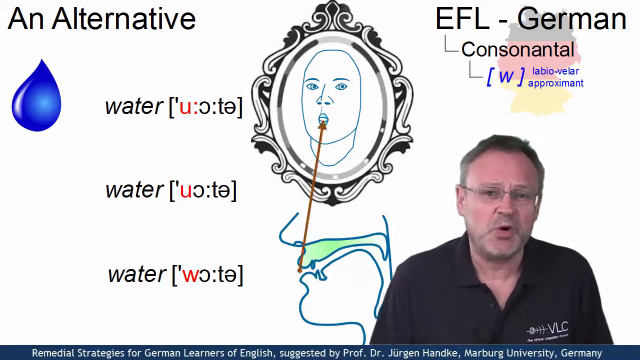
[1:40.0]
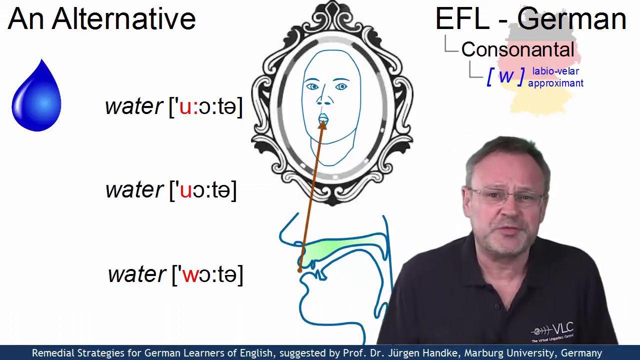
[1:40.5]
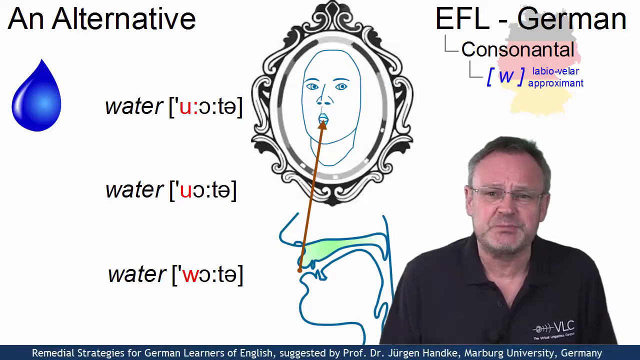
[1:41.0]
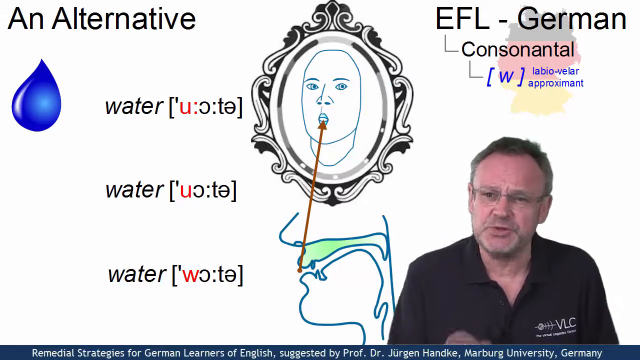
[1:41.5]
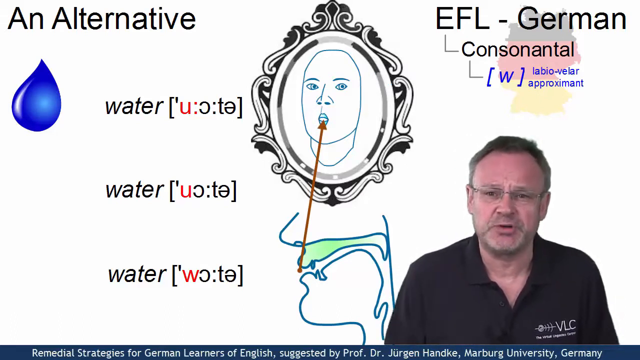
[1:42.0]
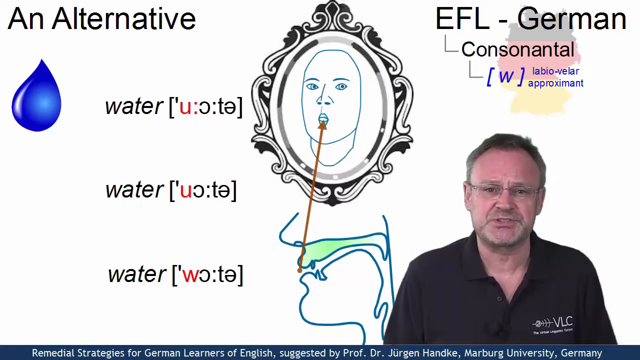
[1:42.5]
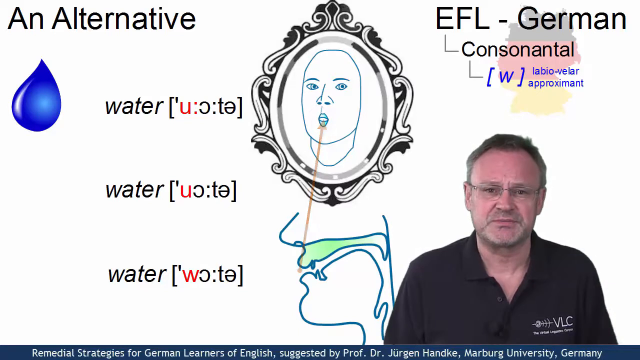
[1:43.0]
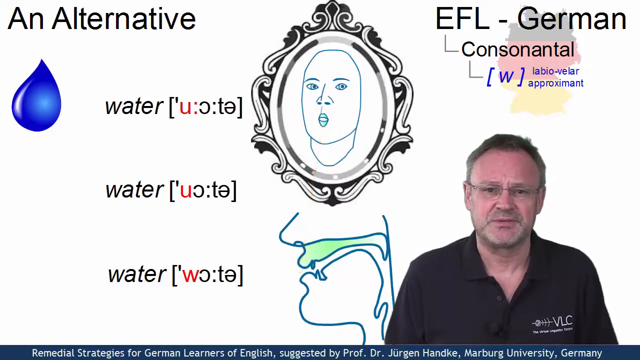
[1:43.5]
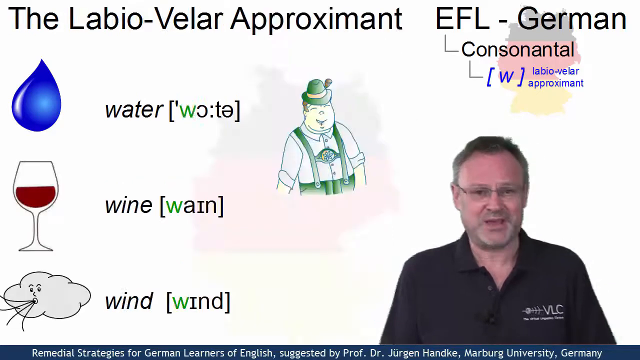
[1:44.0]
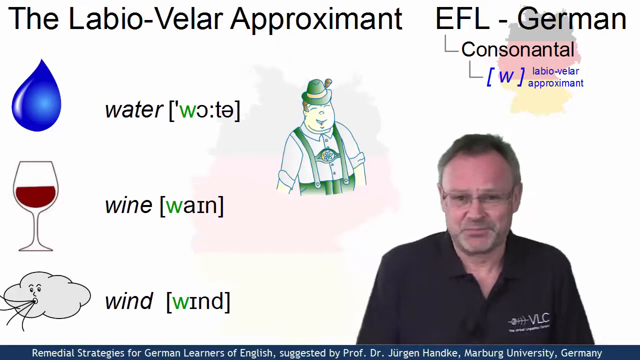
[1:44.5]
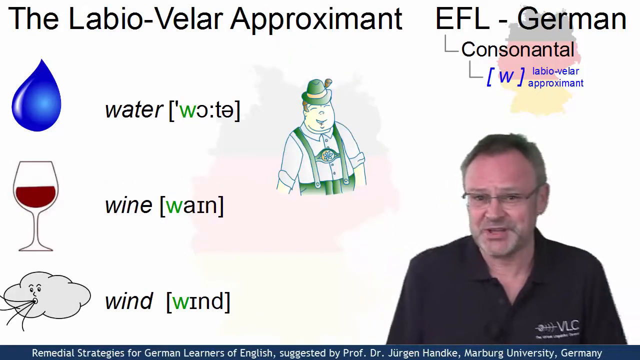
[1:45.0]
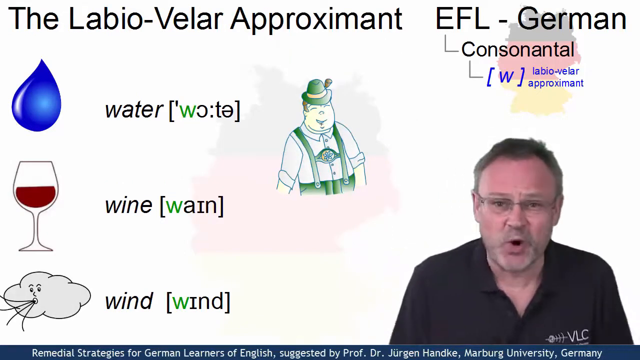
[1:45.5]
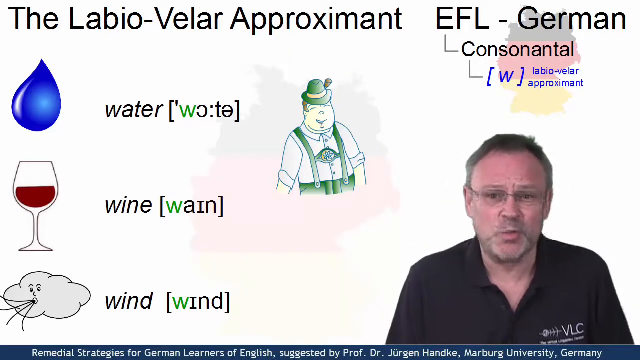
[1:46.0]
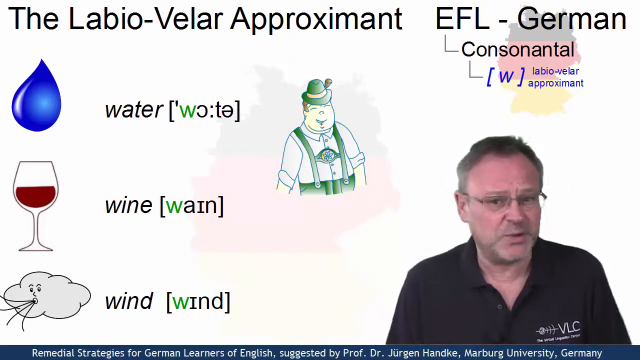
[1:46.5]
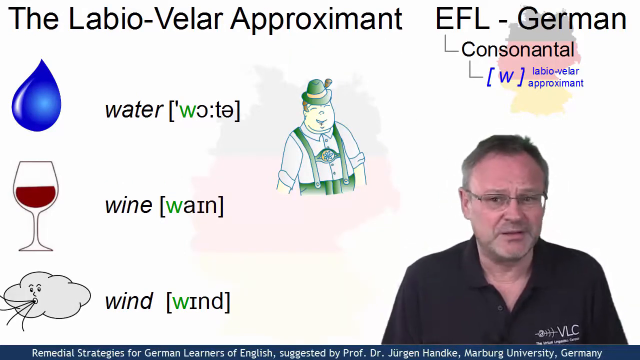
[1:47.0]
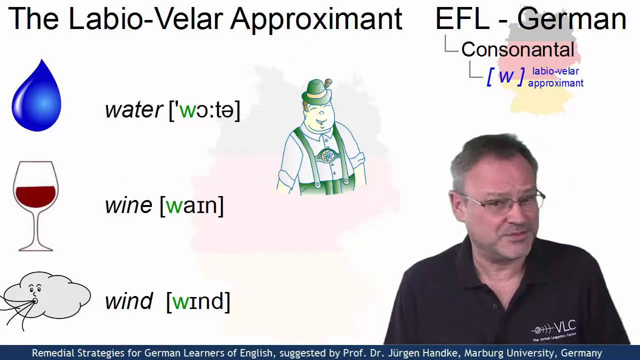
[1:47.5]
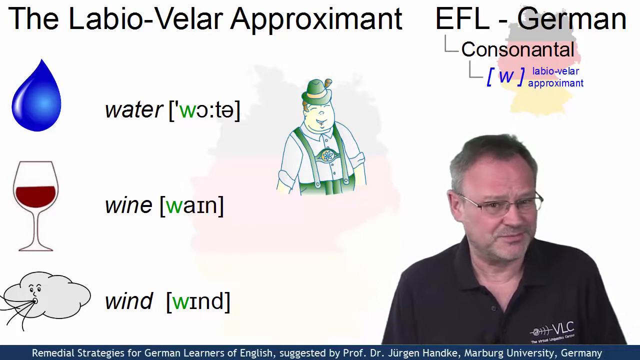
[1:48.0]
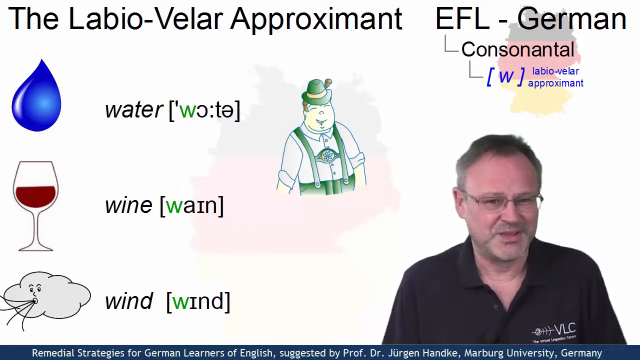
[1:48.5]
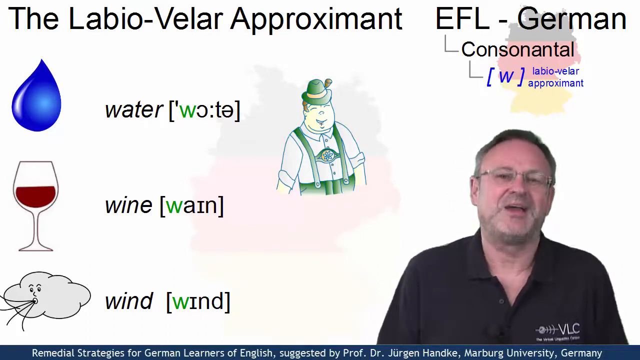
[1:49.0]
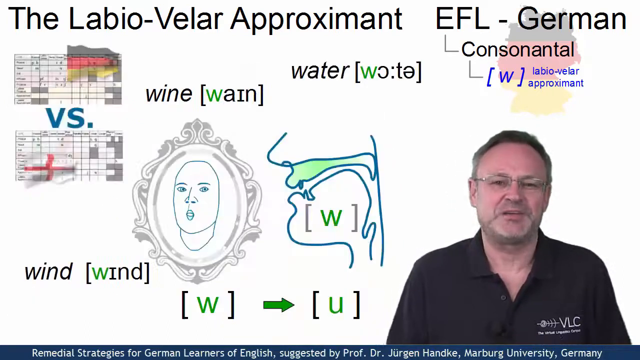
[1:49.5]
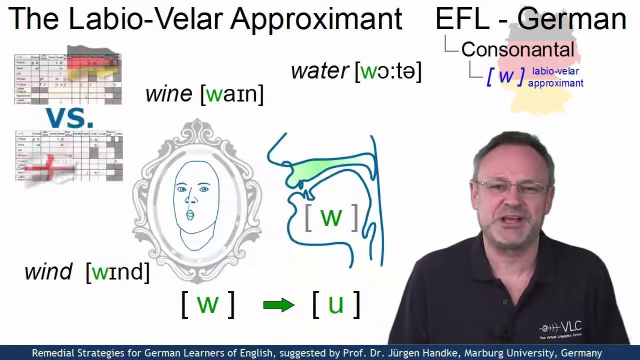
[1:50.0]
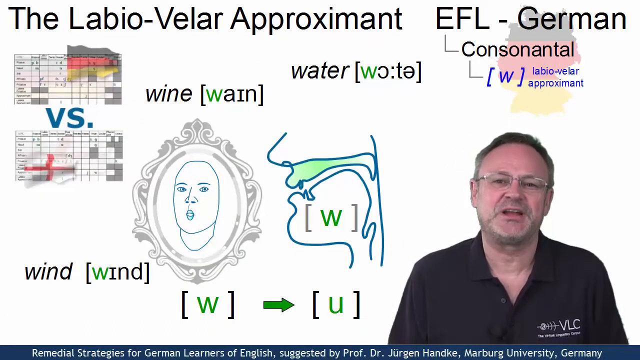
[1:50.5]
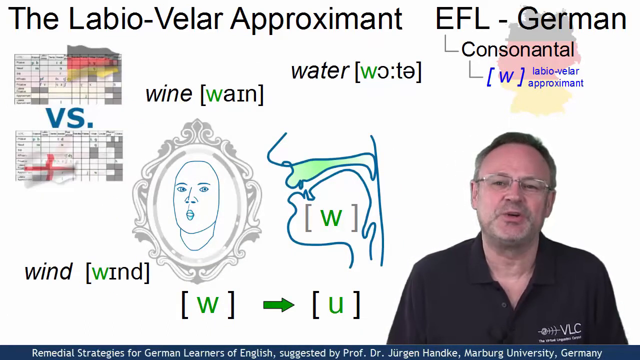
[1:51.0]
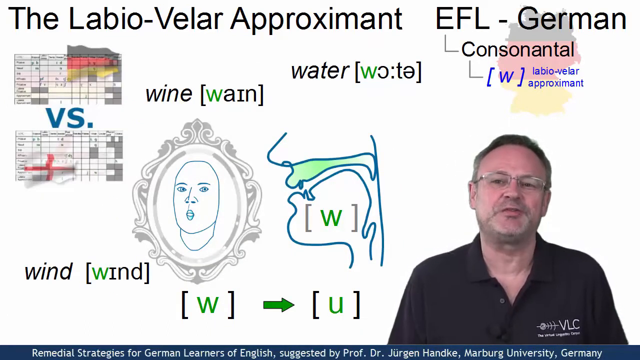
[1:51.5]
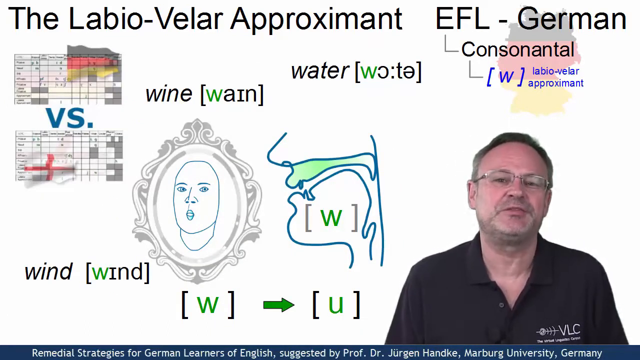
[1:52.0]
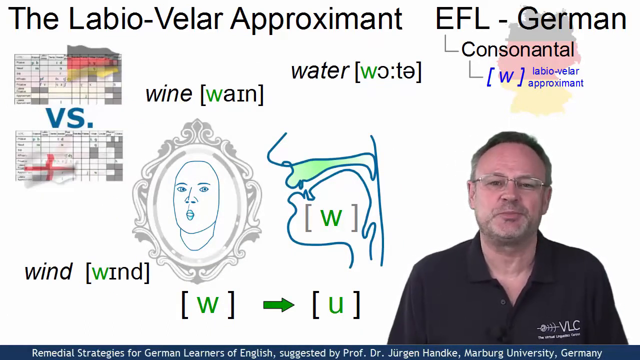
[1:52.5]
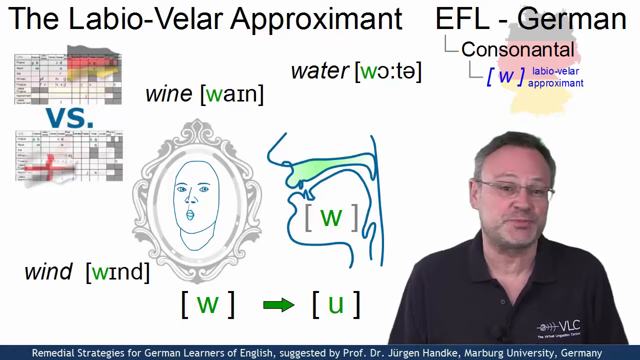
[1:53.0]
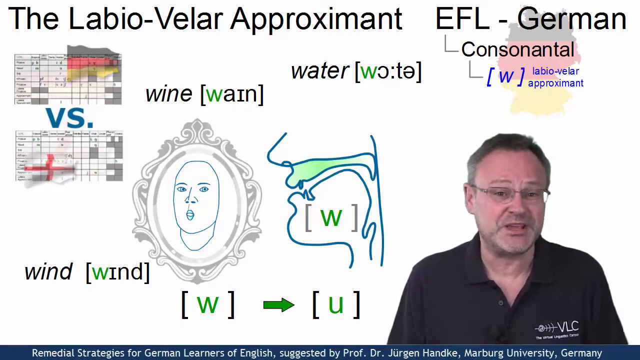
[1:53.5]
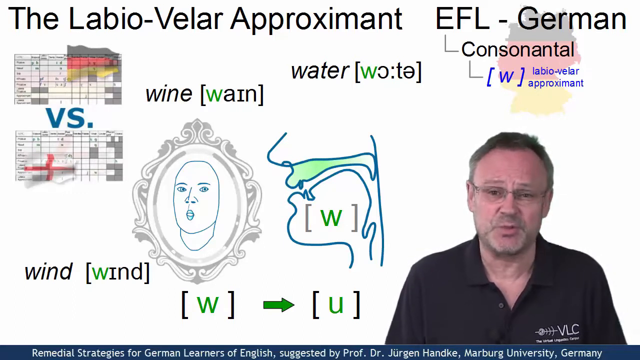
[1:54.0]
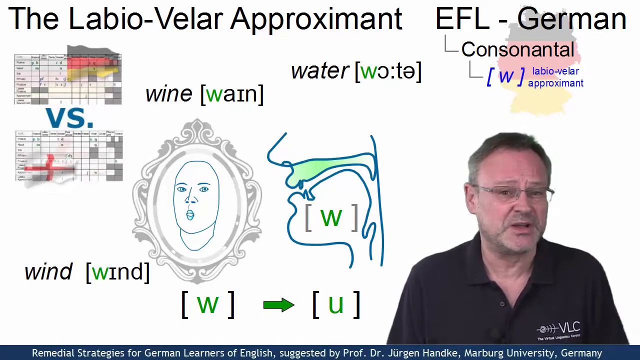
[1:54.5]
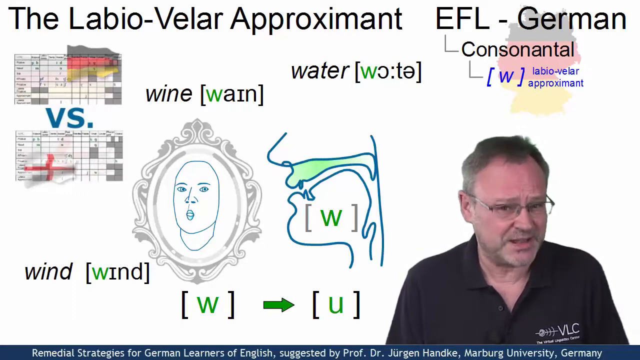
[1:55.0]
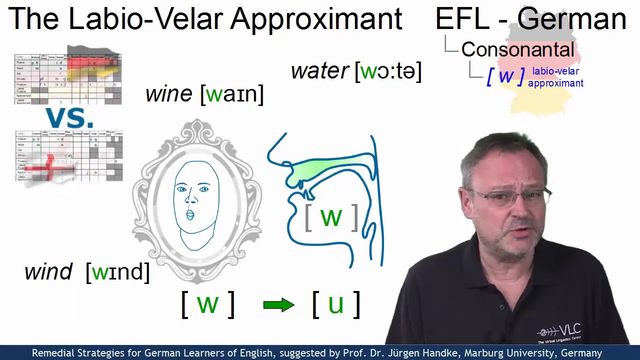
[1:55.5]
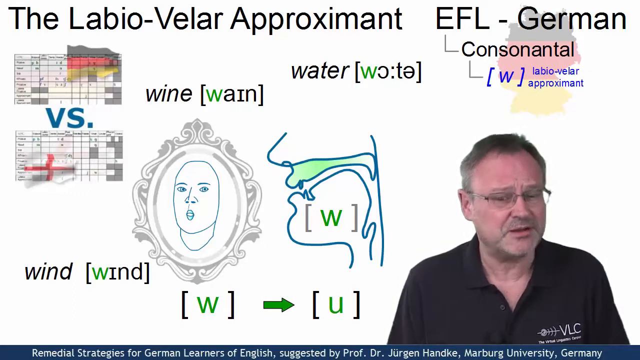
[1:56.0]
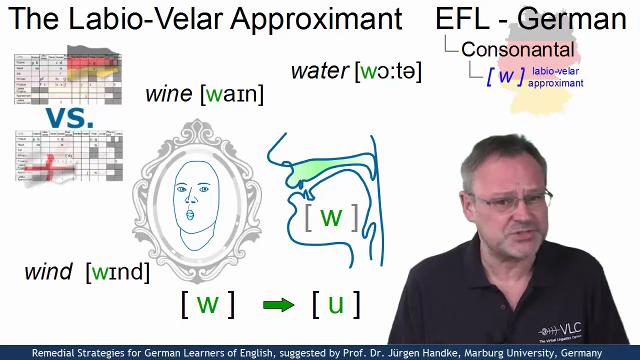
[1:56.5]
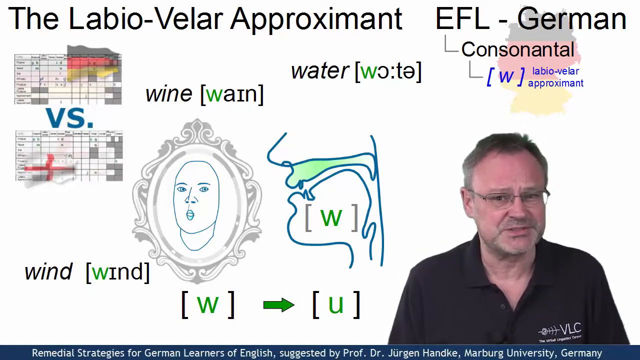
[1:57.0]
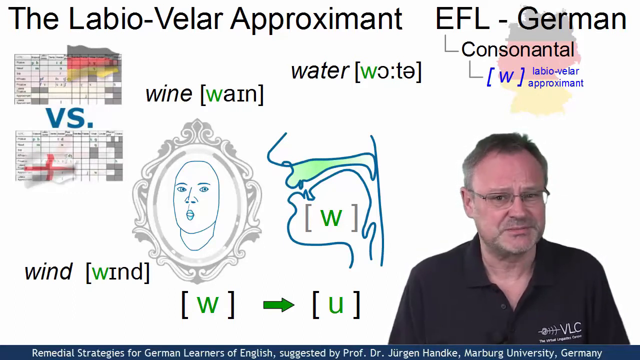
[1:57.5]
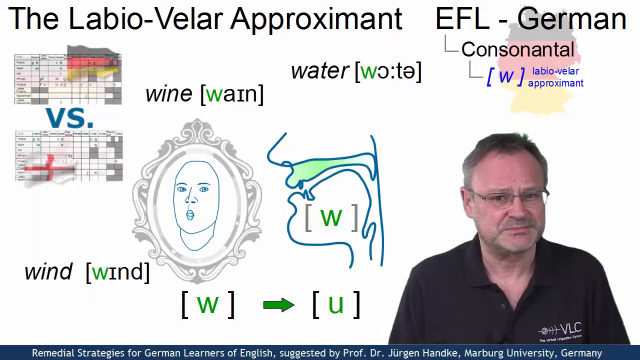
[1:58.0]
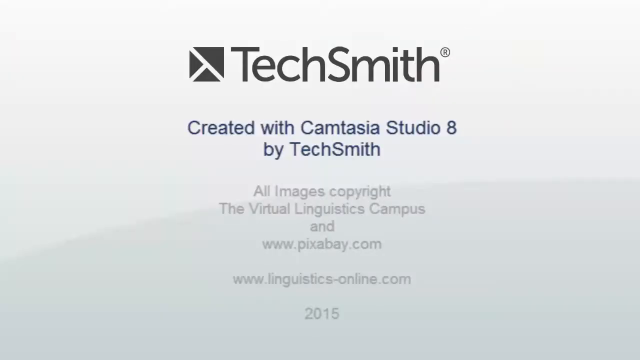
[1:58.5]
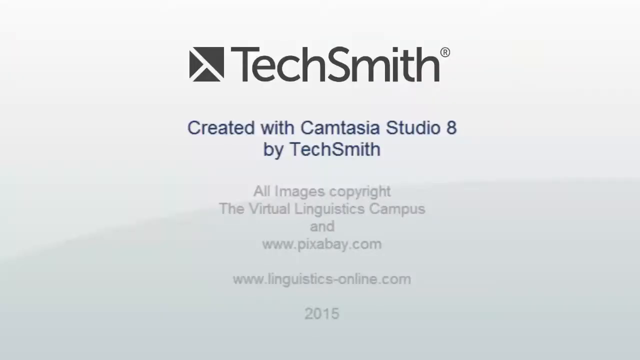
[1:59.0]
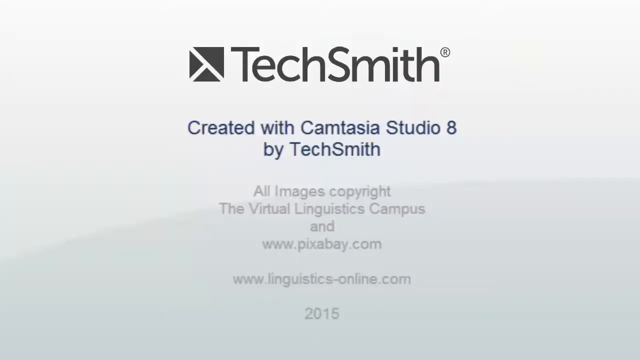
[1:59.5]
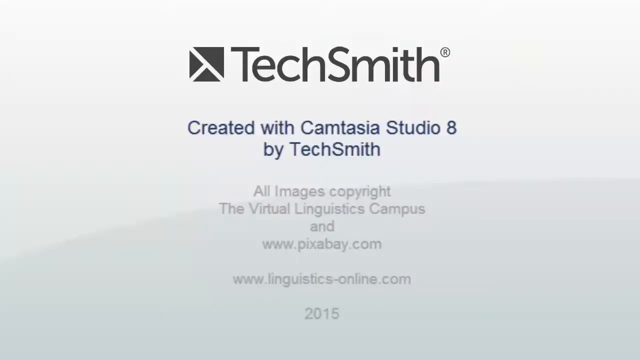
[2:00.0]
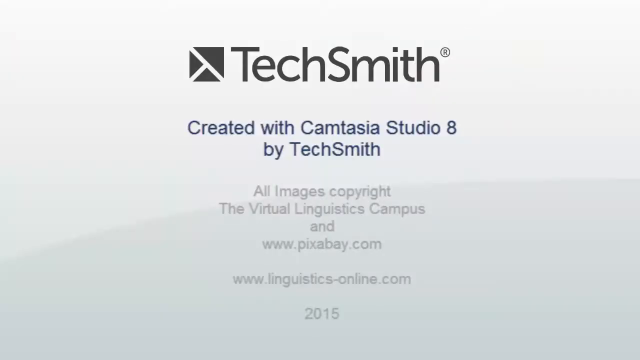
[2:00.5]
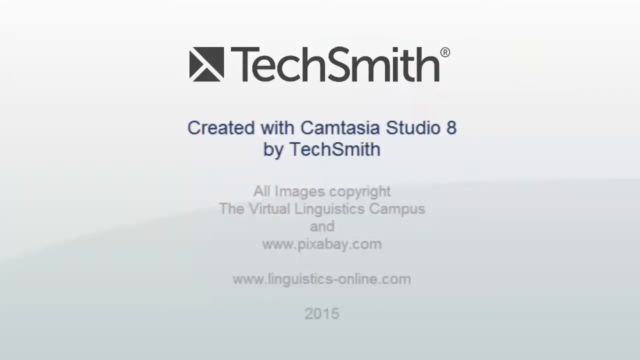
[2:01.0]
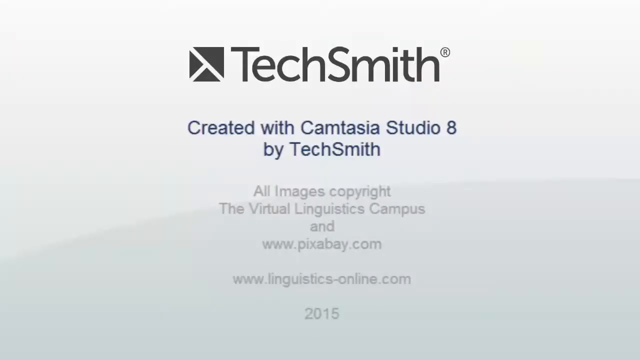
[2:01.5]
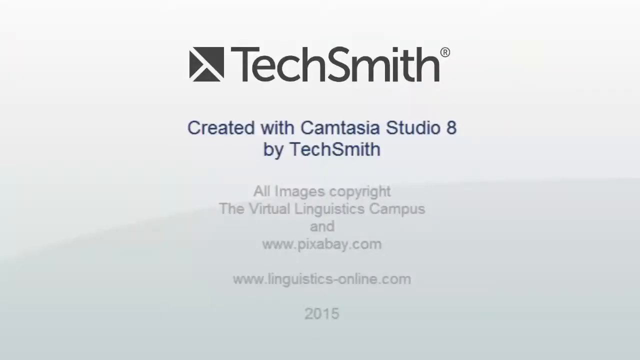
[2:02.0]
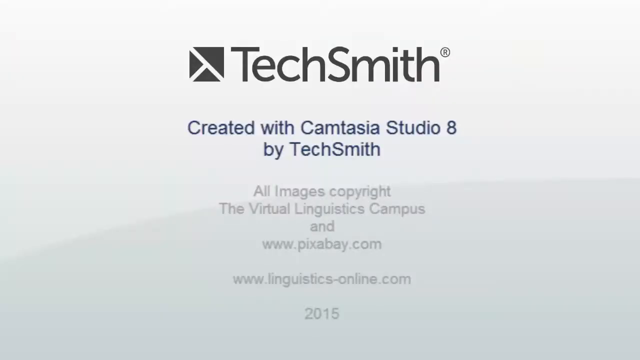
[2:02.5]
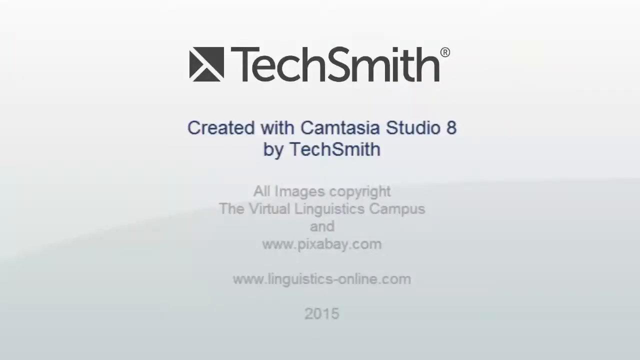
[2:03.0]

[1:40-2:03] A picture frame appears over the person's face, showing the mouth structure and how it should be. The video goes back to water, wine and wind, with the W highlighted in green, showing the correct way to pronounce the words, going from a W to a U sound using the top lip. There is a diagram of the upper lip and two graphs set against each other. An end splash screen shows the channel name TechSmith, with "Studio 8 by TechSmith," copyright information and the year 2015.